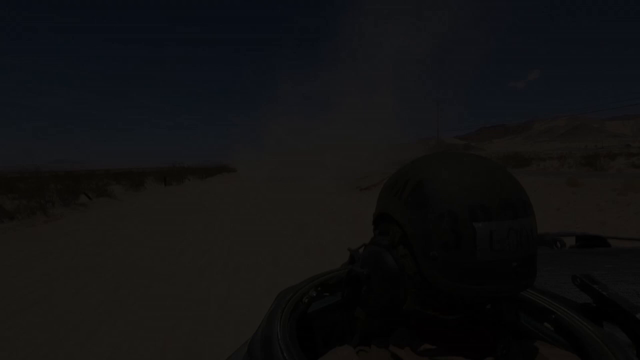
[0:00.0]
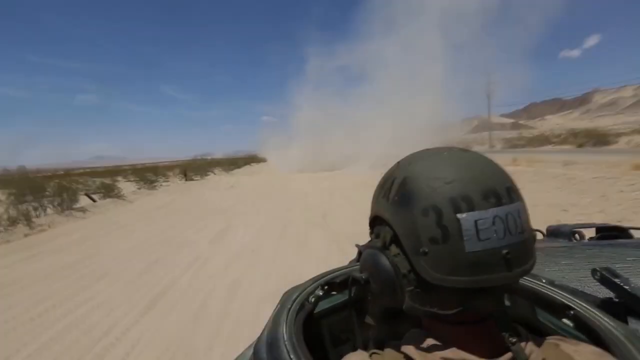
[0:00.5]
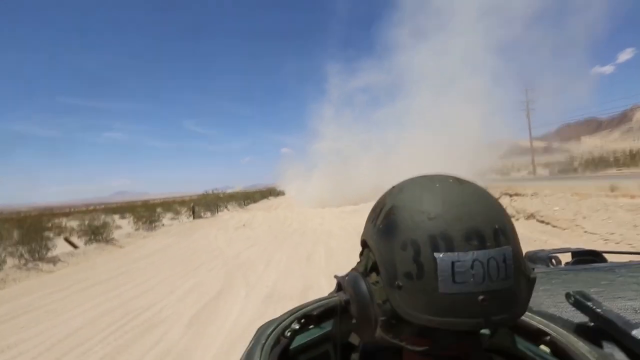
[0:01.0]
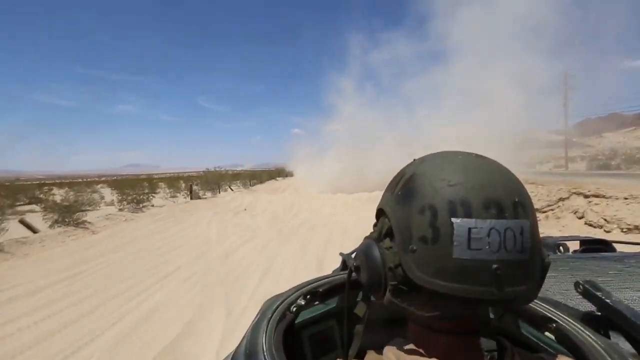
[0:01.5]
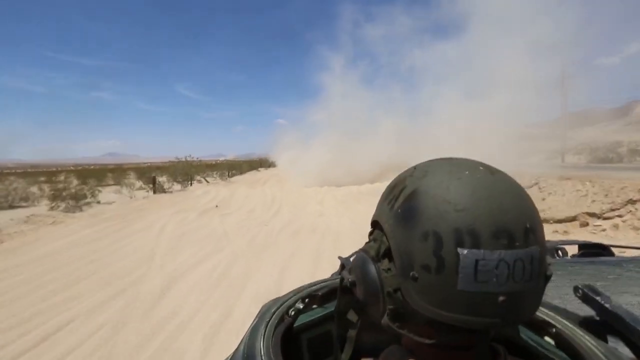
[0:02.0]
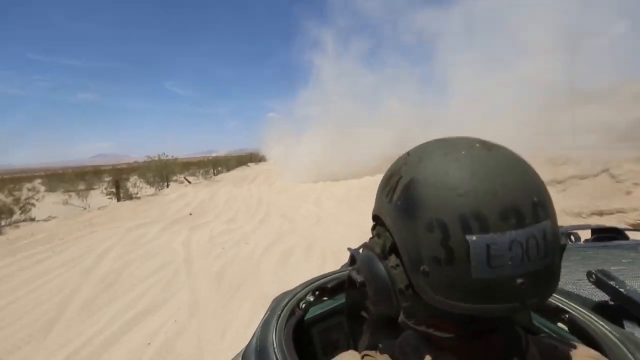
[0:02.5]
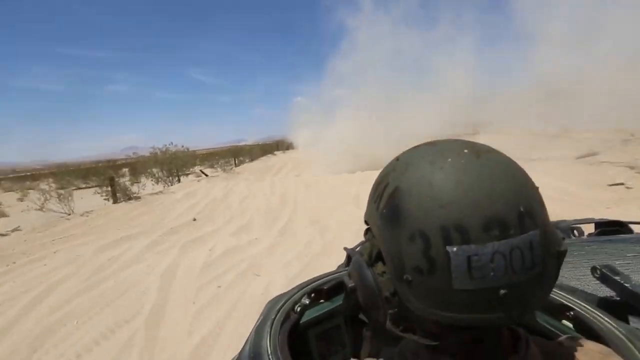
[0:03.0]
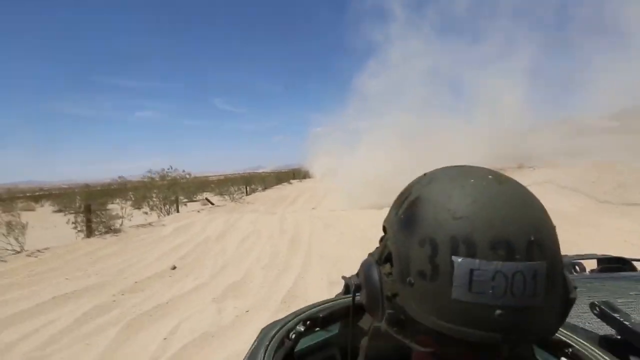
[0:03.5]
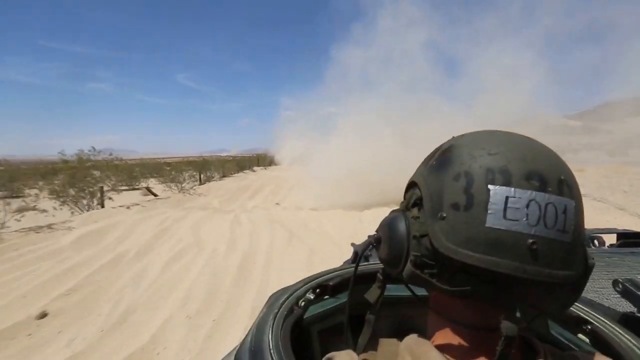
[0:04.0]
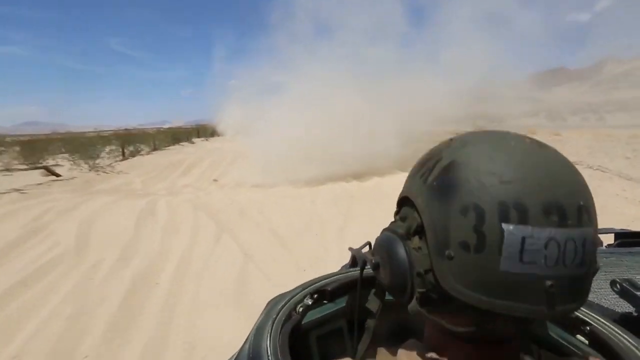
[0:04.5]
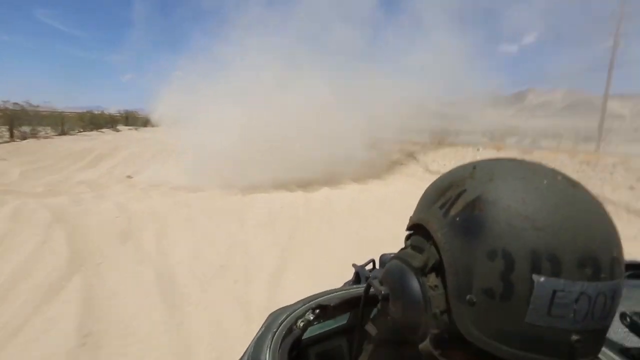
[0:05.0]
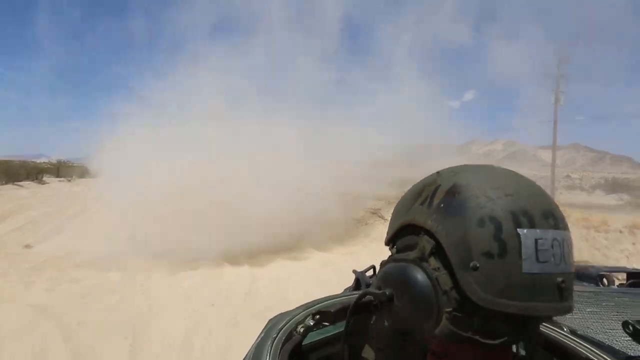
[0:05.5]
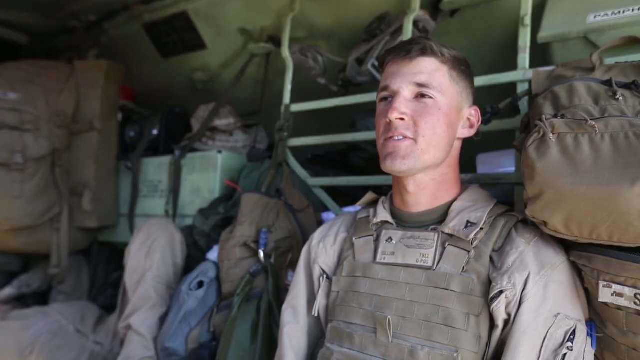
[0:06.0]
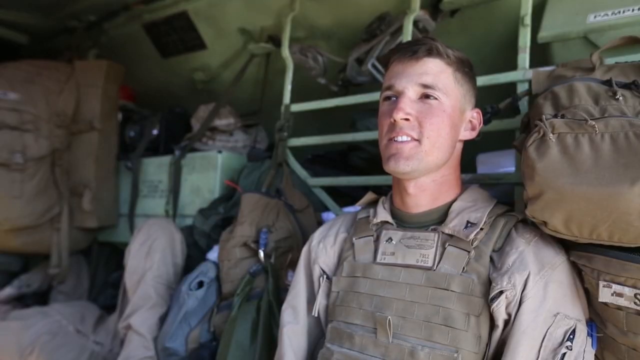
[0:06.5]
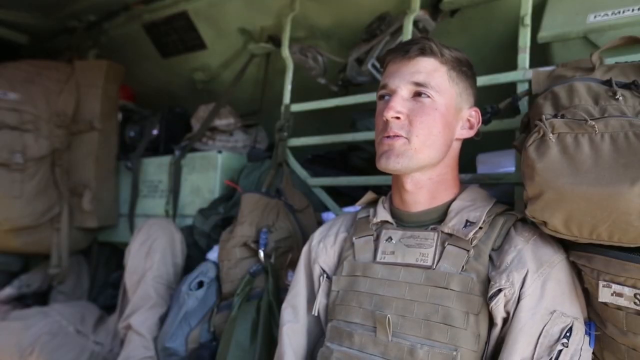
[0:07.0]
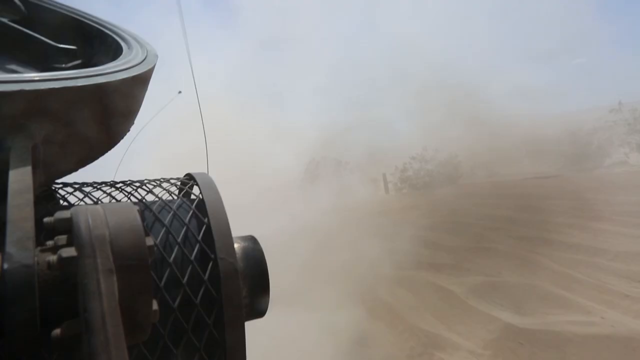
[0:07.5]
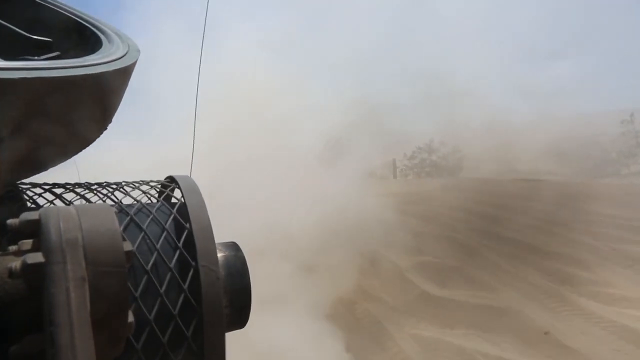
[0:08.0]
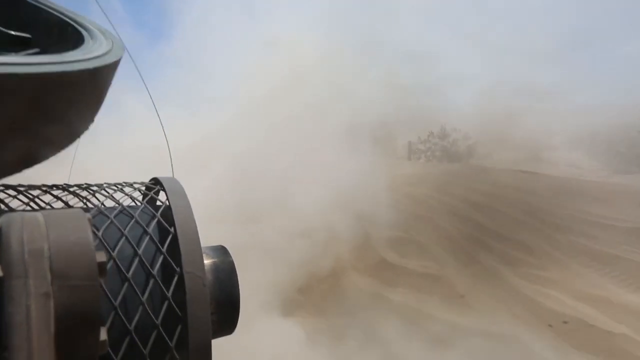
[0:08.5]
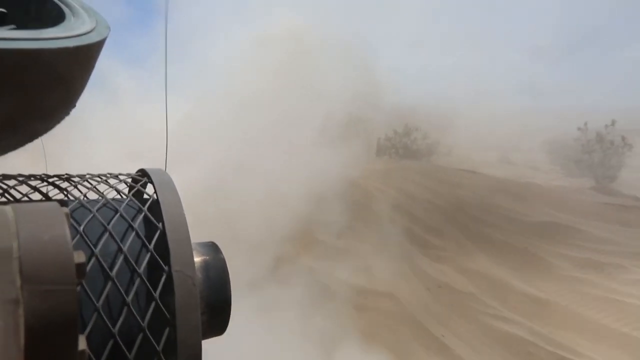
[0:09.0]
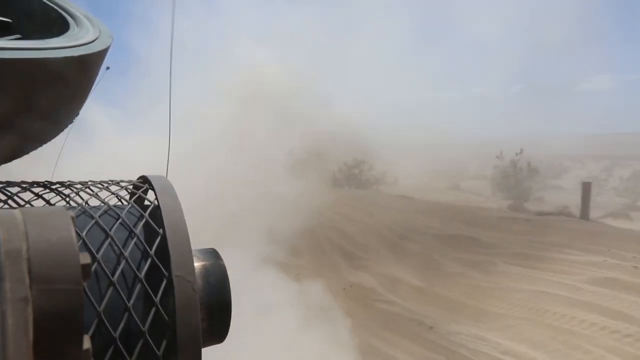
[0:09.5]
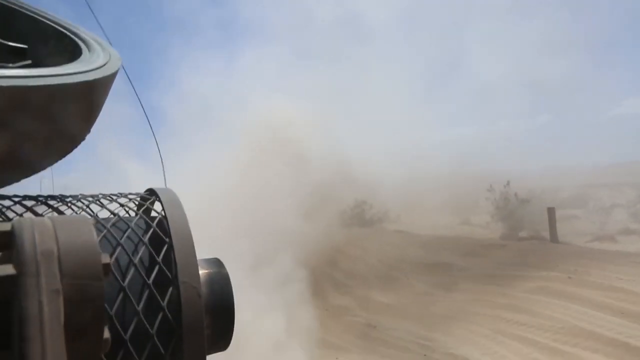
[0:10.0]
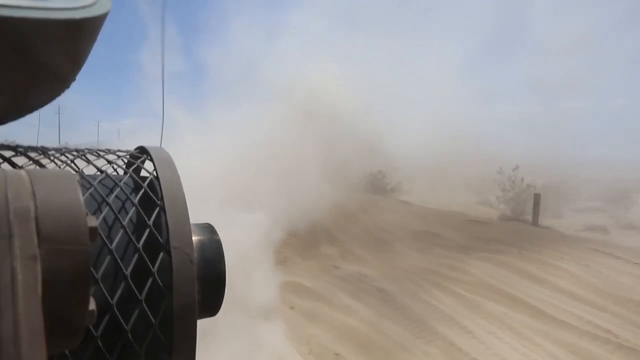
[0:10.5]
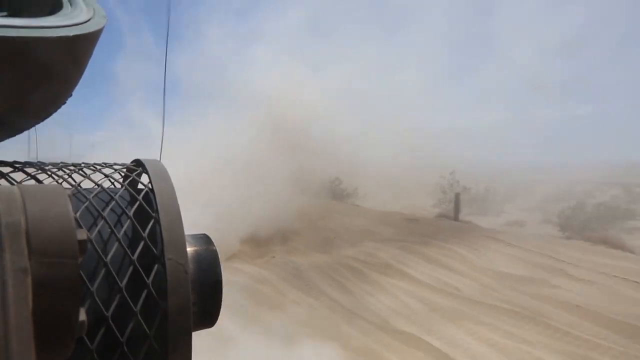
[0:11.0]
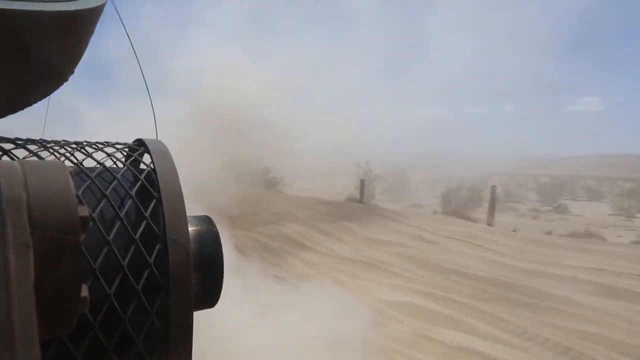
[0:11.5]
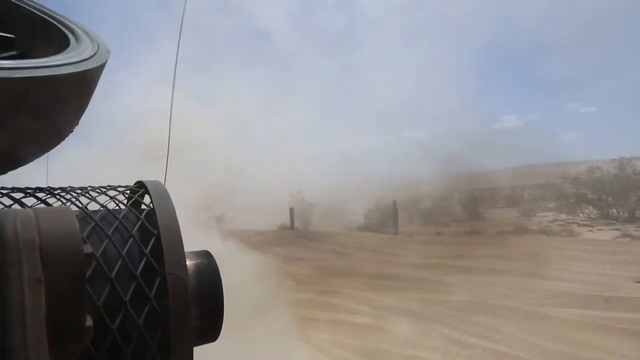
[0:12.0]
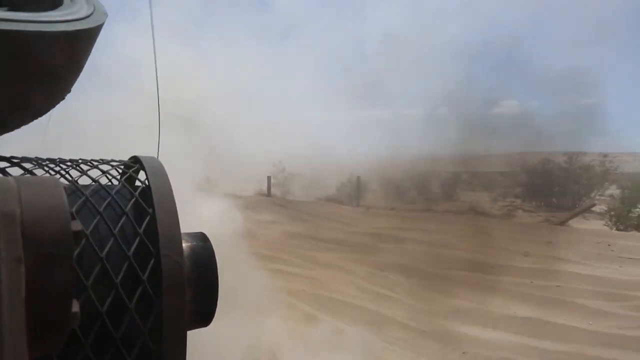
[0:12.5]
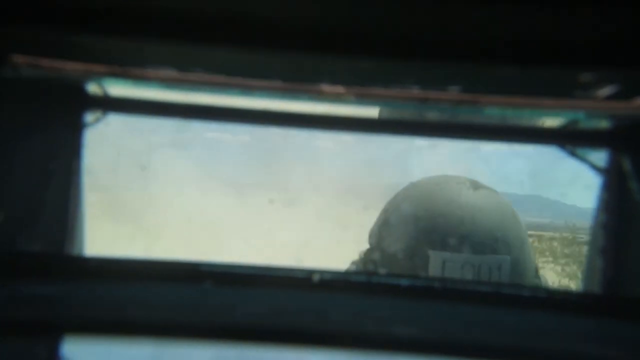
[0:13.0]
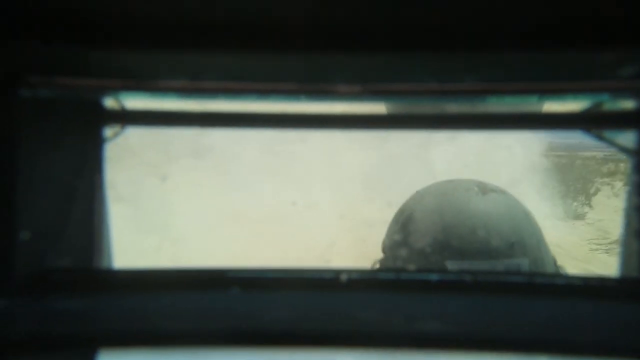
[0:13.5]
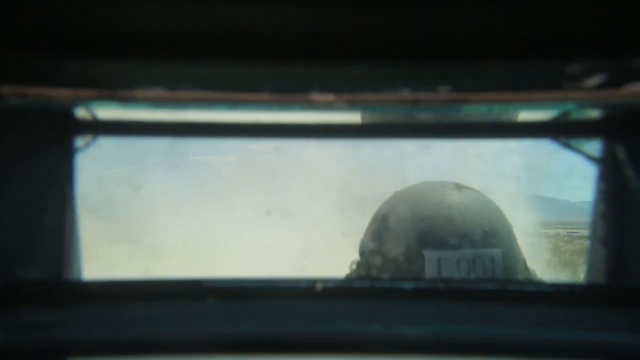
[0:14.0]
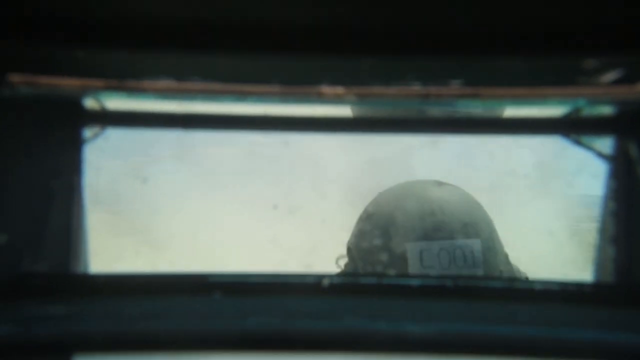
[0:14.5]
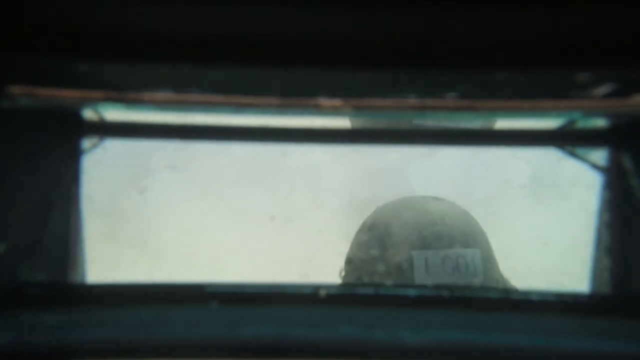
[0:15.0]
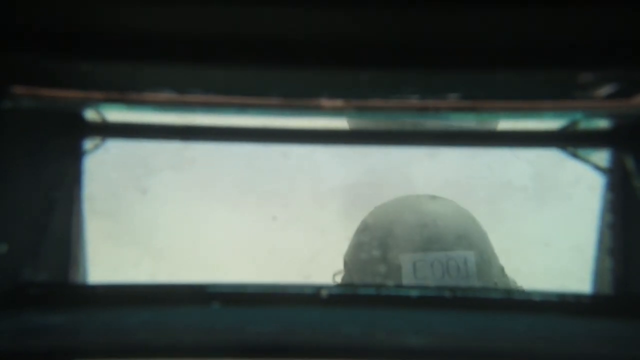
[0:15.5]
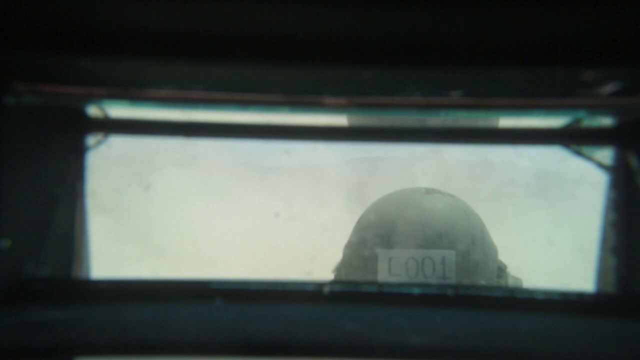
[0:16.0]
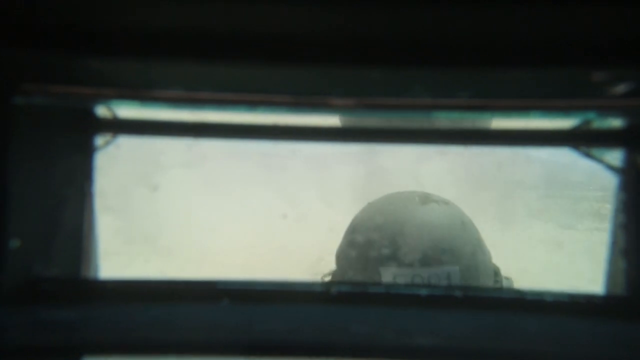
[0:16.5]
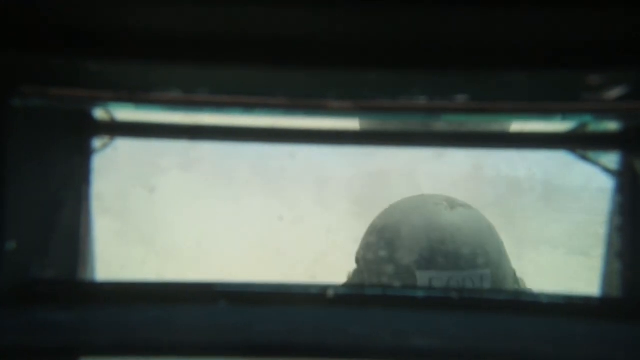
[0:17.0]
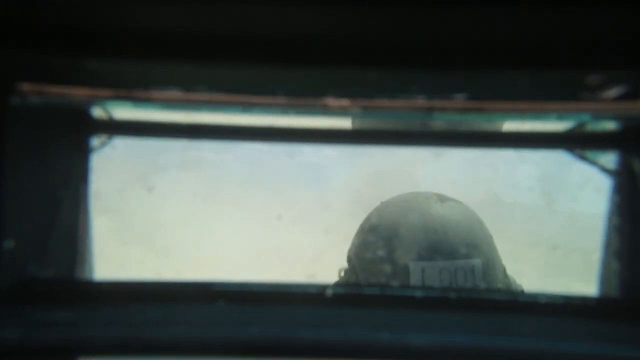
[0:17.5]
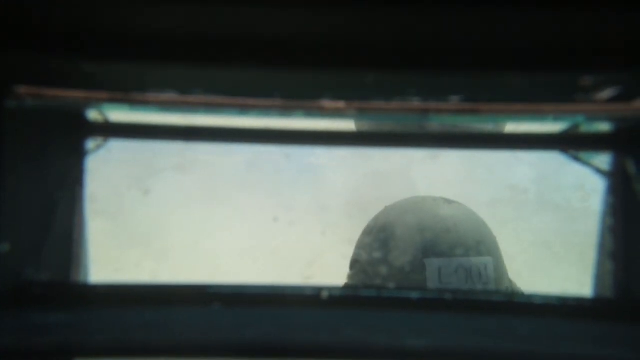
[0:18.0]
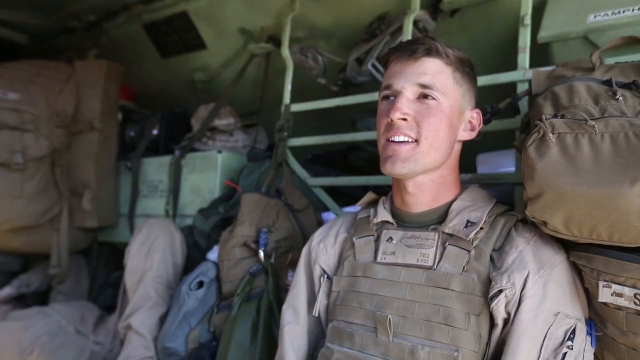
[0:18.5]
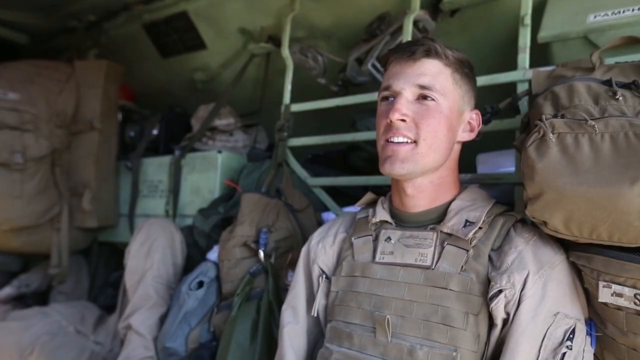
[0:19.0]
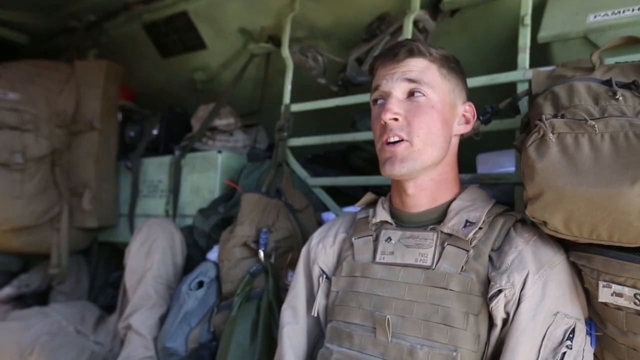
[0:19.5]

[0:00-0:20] The video opens with what looks like a tank being driven forward, apparently filmed from the tank itself. What looks like a soldier wearing a helmet is right in front of the camera, and below him is the body of a tank; the camera is probably mounted behind the soldier's head. They are going over what looks like a sand dune area. The video then cuts to what is likely an interview with a soldier. He is toward the right side of the frame, looking toward the left, possibly at a reporter off camera. He appears to be in some kind of bunker, possibly an airplane bunker, with a lot of green metal and a lot of army fatigue-type bags behind him. He speaks briefly to the camera, looking quite pleased. The video then cuts to more footage out in the desert, where a lot of sand is being swept around. What looks like the side of the same tank is visible, but the distance can barely be made out because so much sand is being thrown around by the tank.